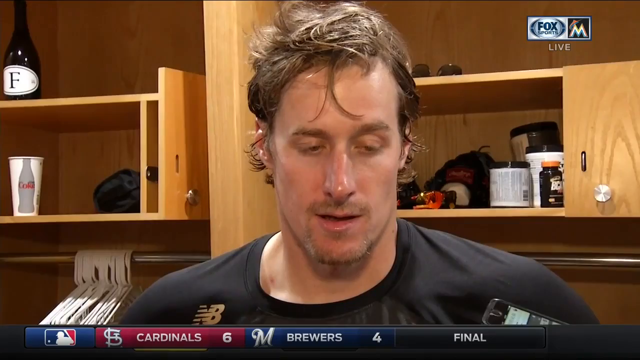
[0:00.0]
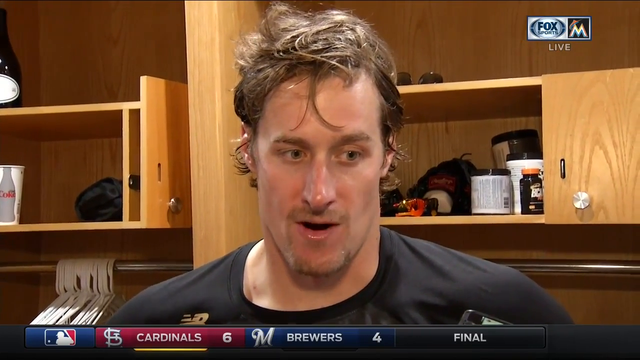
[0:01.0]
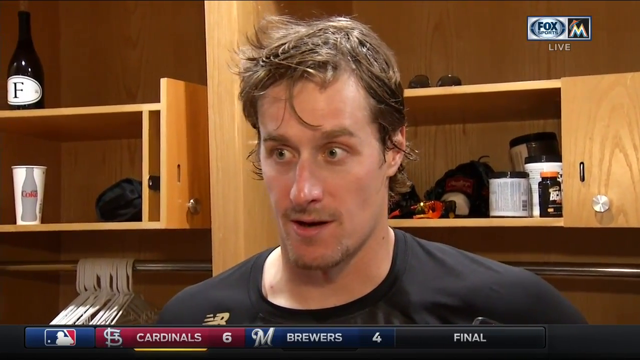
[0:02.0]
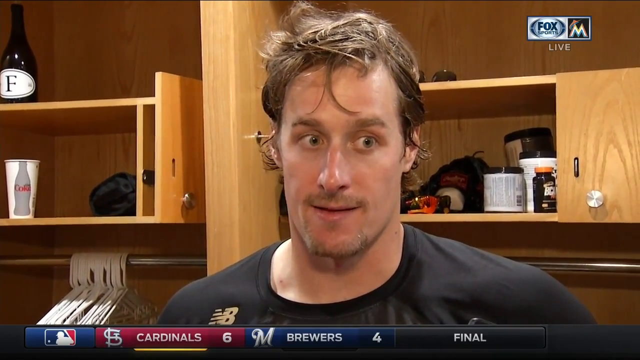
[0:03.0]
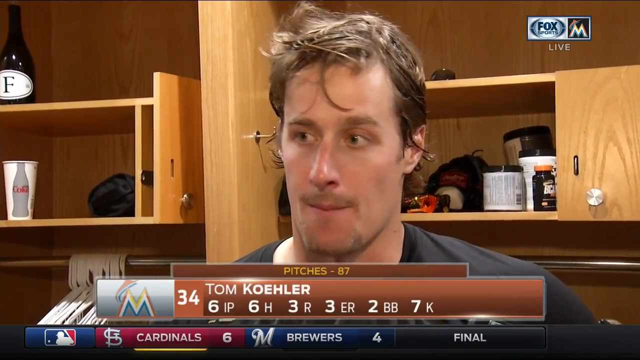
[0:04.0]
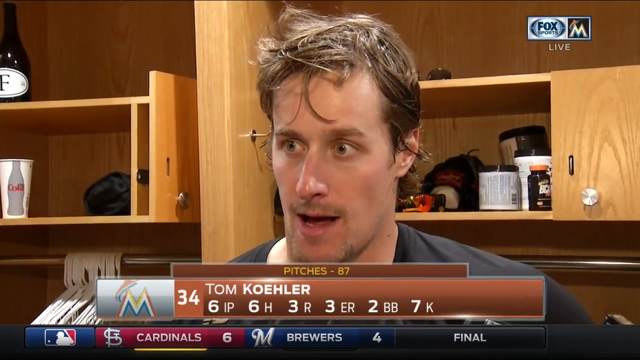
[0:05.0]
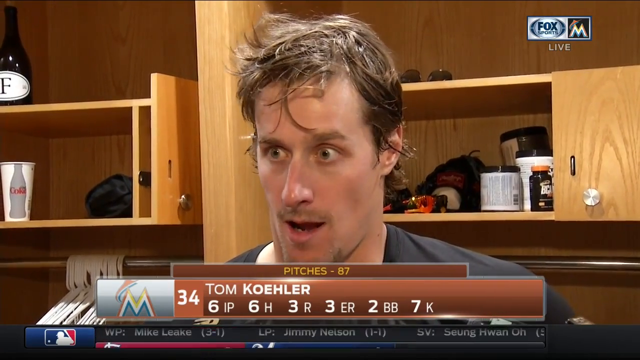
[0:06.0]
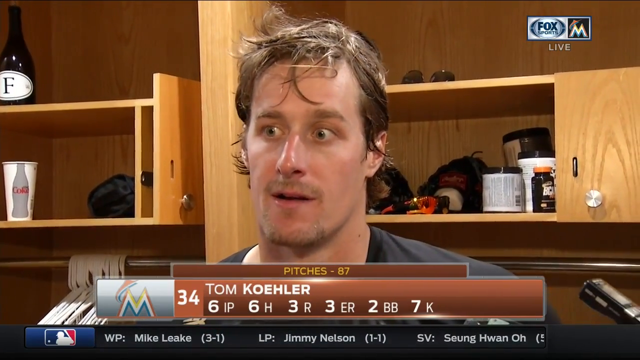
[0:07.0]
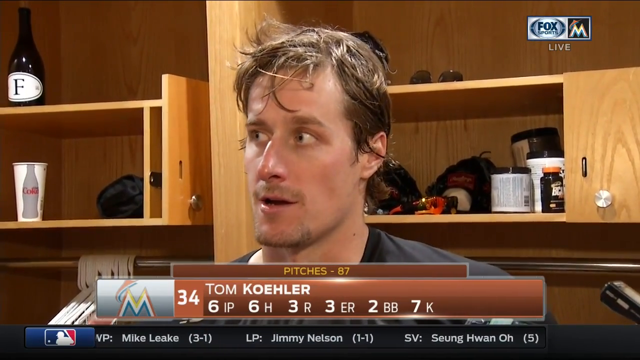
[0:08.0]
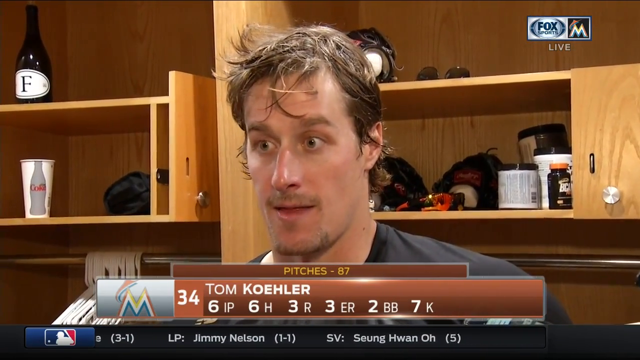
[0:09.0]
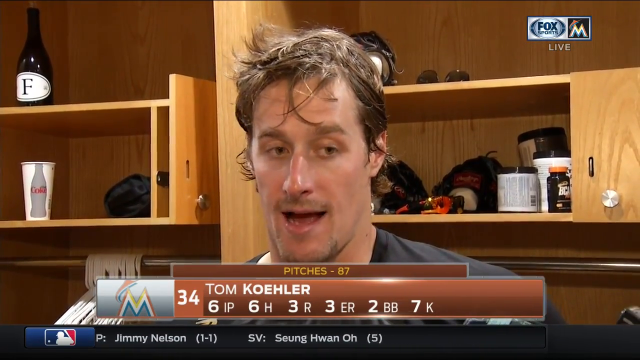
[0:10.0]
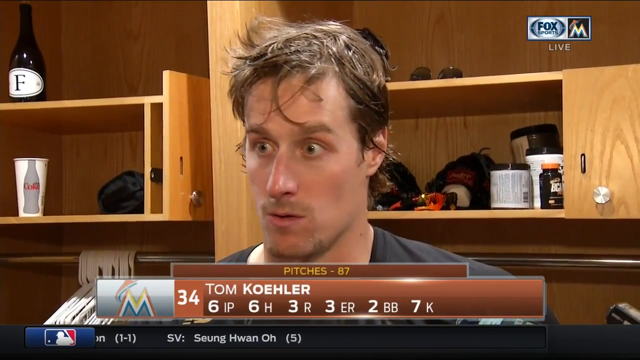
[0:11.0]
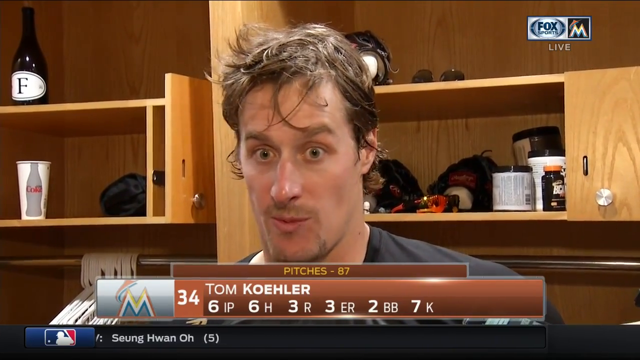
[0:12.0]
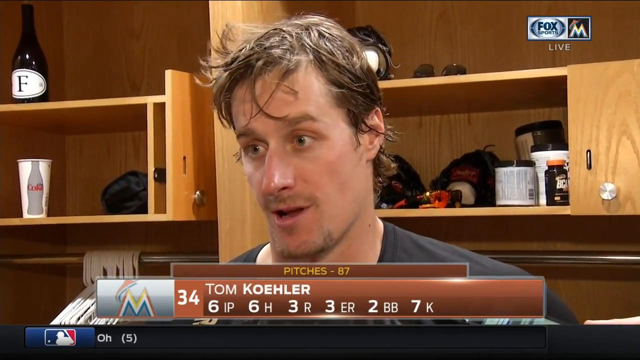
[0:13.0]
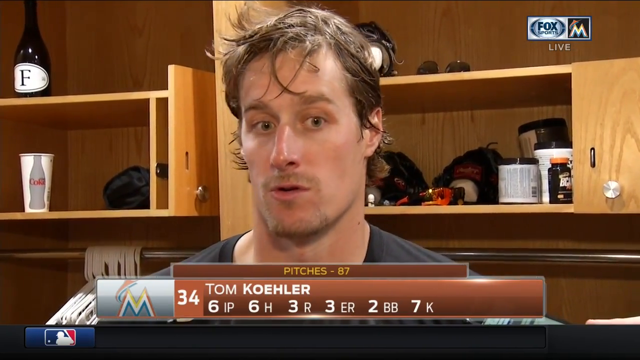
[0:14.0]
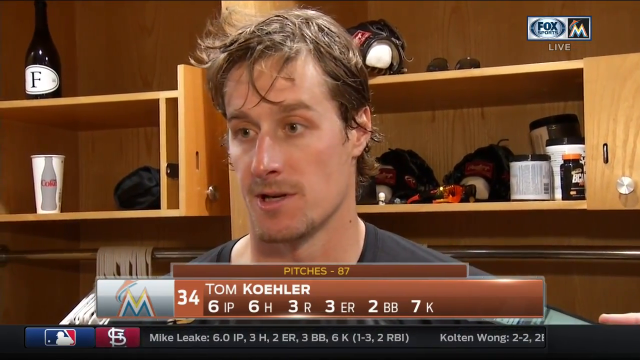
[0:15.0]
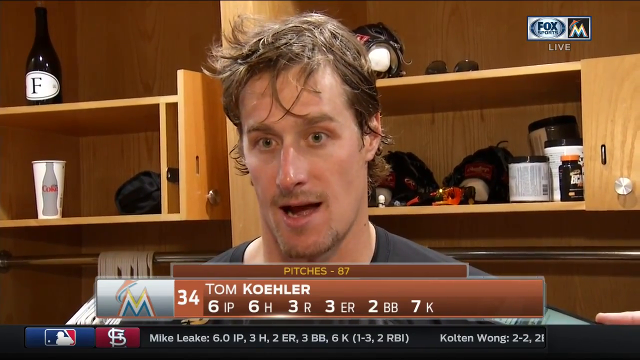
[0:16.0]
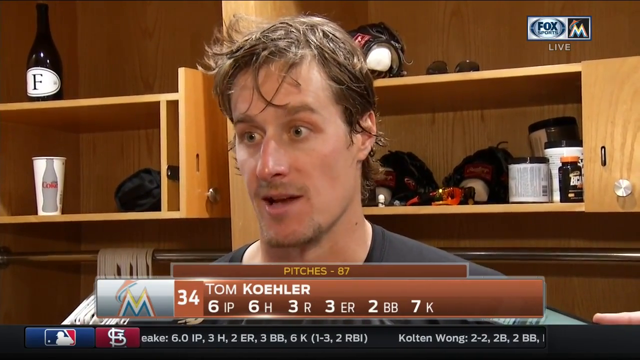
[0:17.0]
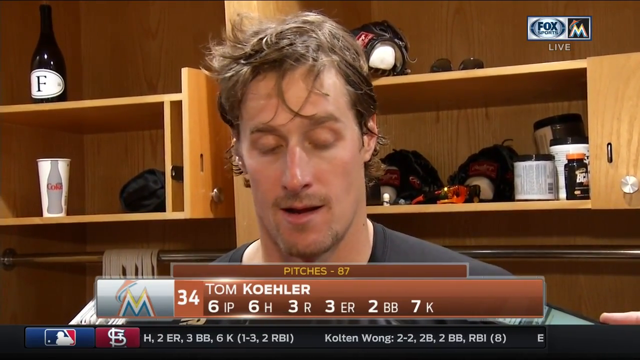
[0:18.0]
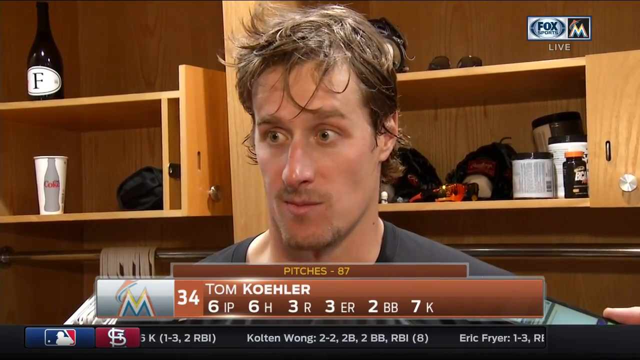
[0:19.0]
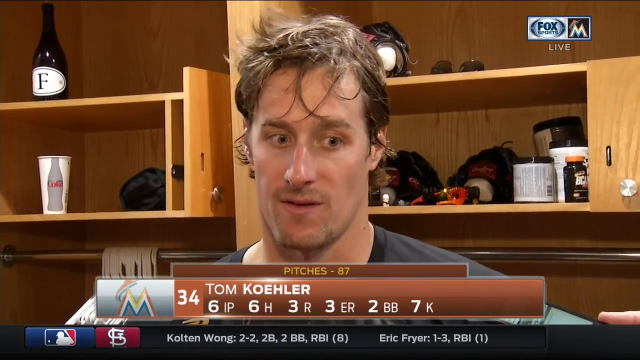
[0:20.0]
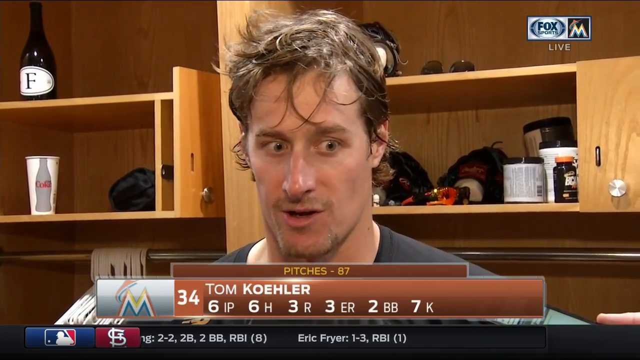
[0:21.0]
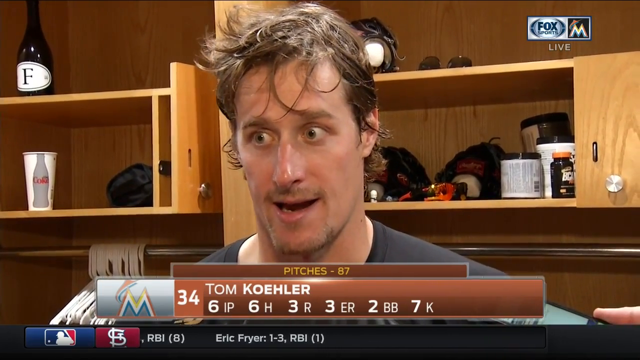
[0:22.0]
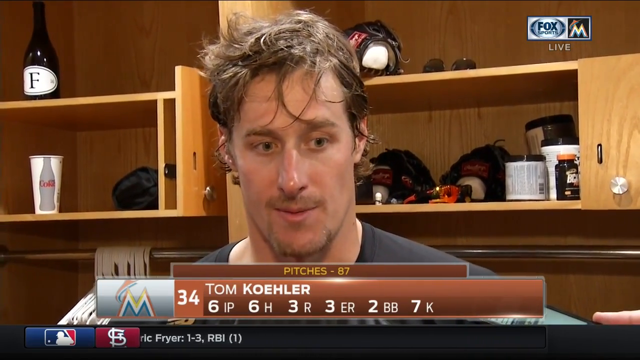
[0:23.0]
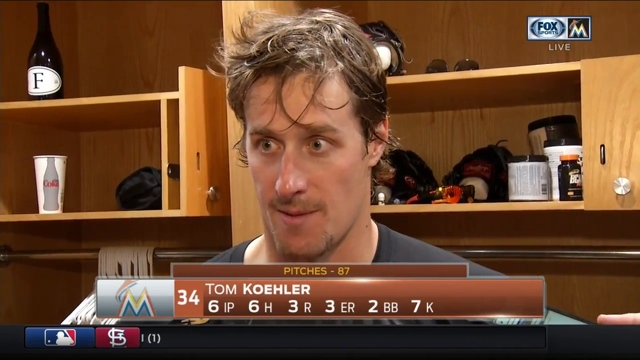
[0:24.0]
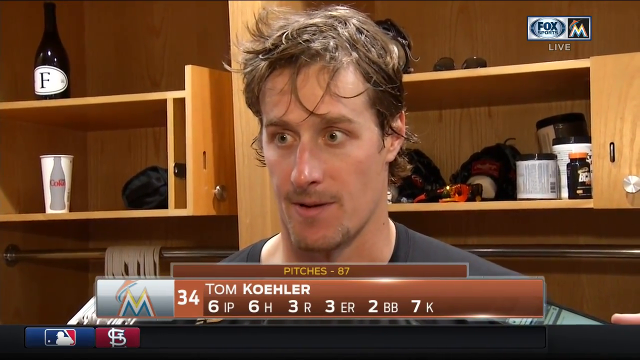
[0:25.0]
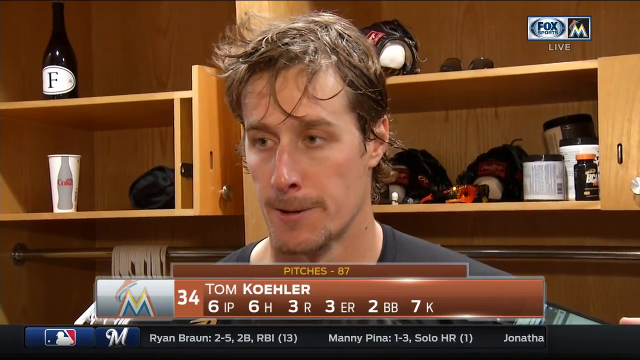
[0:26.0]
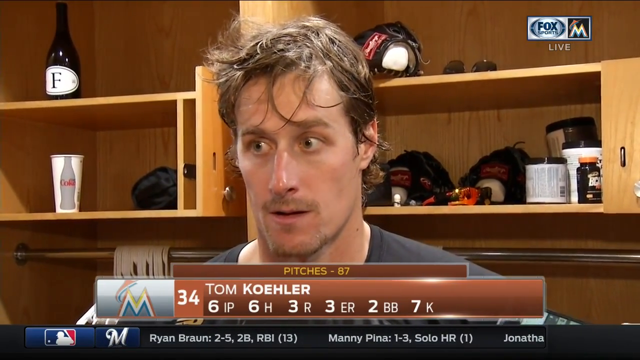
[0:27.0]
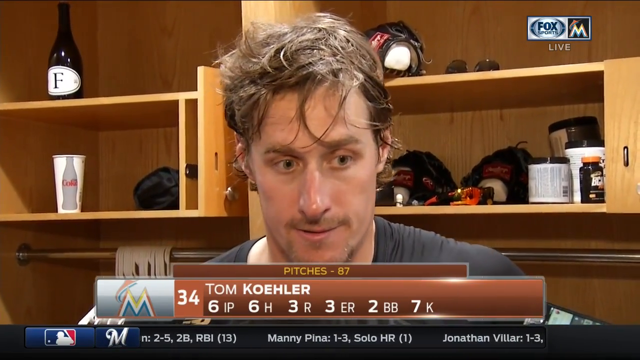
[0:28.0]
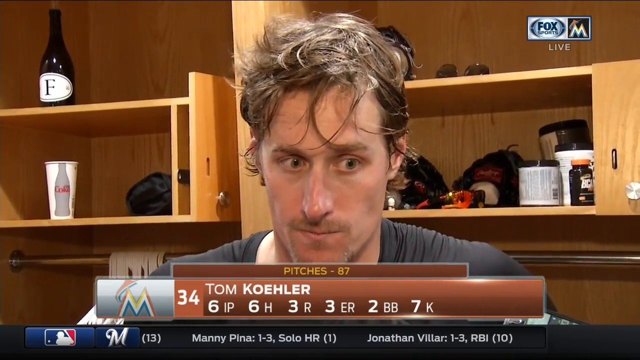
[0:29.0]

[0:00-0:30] A man is shown from roughly the neck up, apparently being interviewed. He wears a black pullover shirt; the tight camera angle makes it impossible to tell whether it is long-sleeved. A graphic appears with his name, "Tom Kohler," and his number, 34. Above him it shows pitches: 87. Below are his stats for the game: six innings pitched, six hits, three runs, three earned runs, two walks and seven strikeouts. A microphone pokes out on the right, and he faces someone to the left, apparently a journalist, probably answering a question about his performance. Behind him are shelves with a bar below them, divided into left and right sections. The bar on the left holds maybe 10 to 15 white plastic hangers, while none are visible on the right. A Fox logo is in the upper right-hand corner, with a Miami Marlins logo right next to it, and a rectangle in the upper right reads "live" below that.